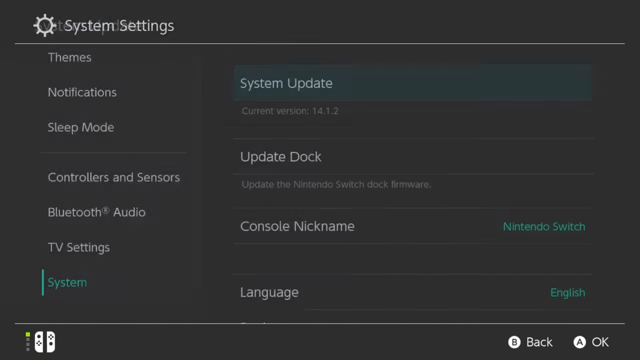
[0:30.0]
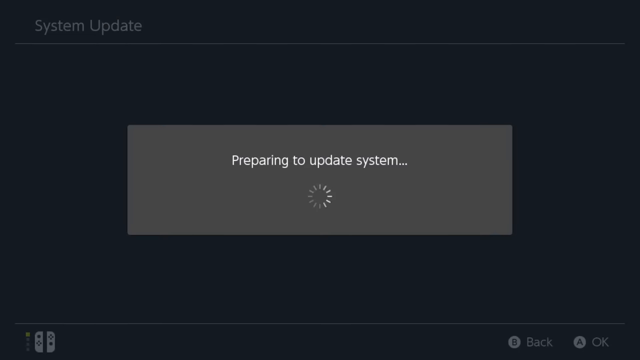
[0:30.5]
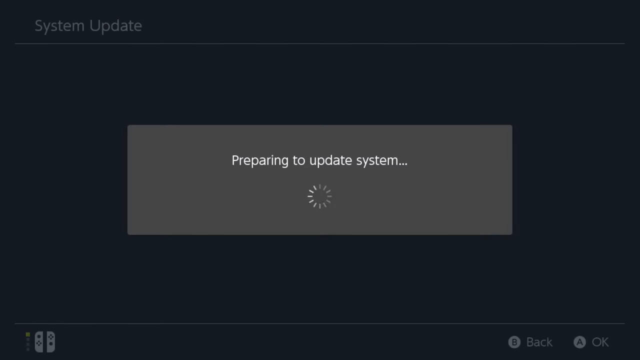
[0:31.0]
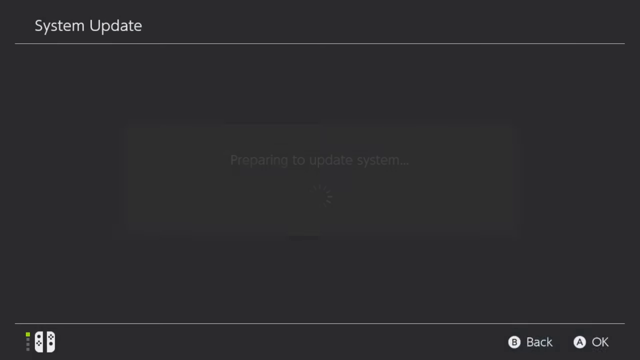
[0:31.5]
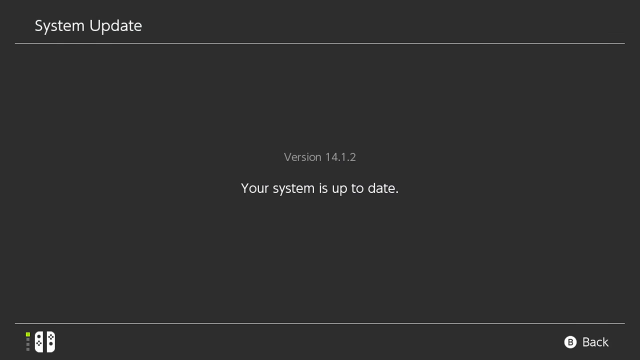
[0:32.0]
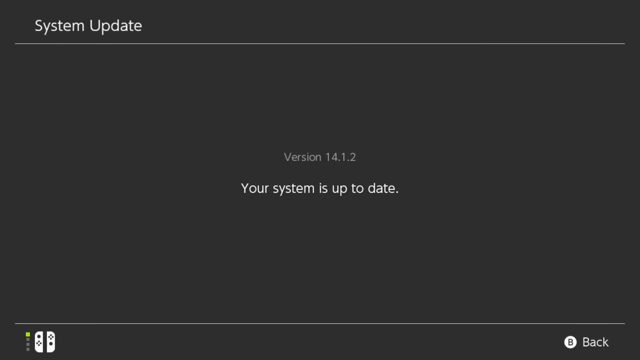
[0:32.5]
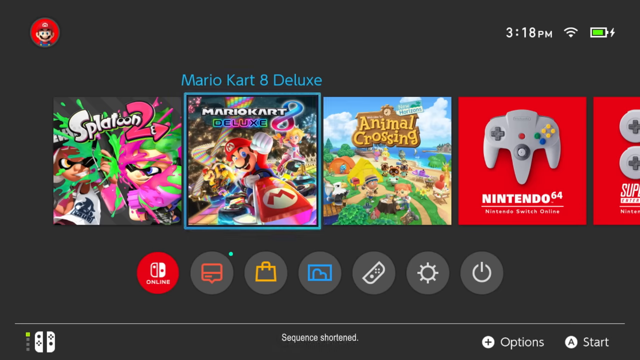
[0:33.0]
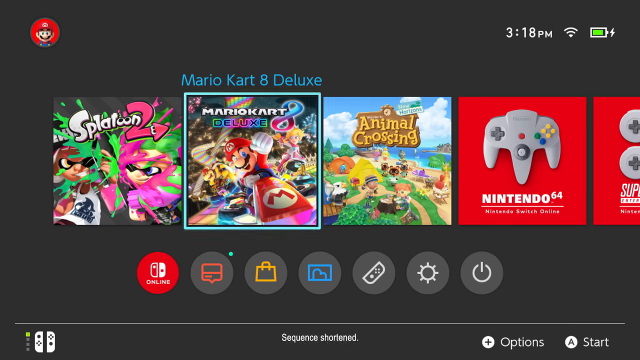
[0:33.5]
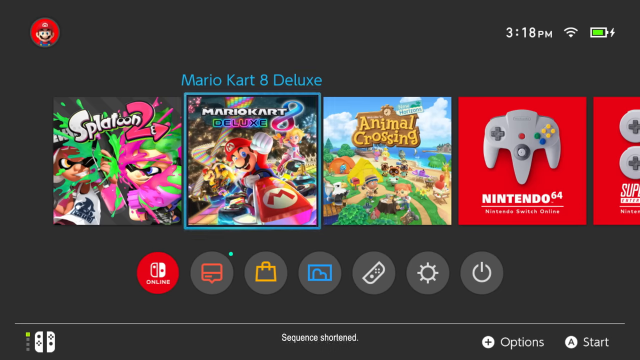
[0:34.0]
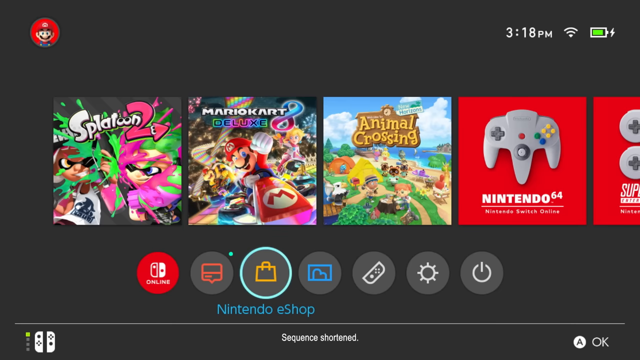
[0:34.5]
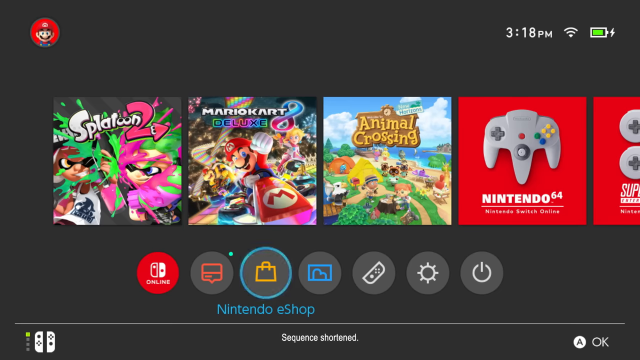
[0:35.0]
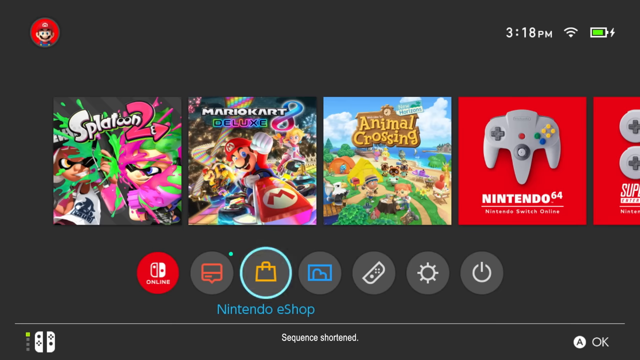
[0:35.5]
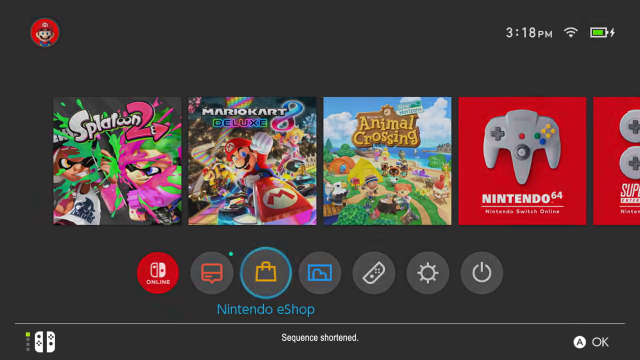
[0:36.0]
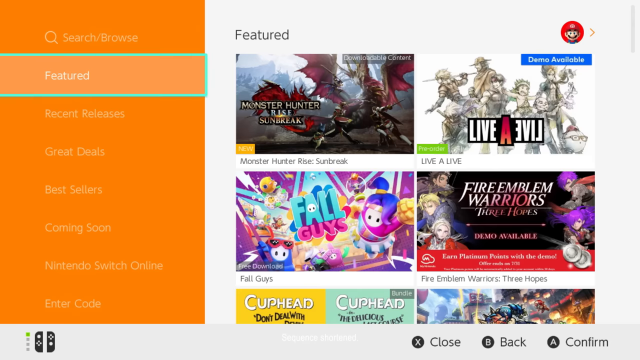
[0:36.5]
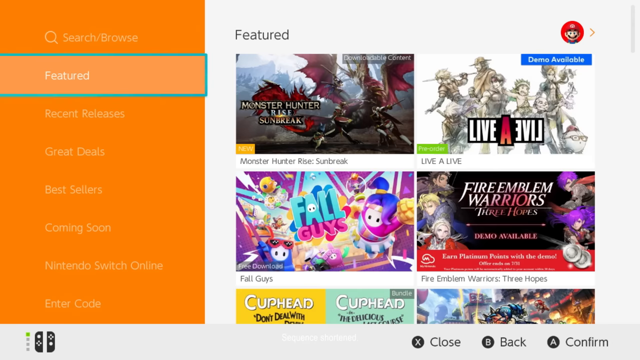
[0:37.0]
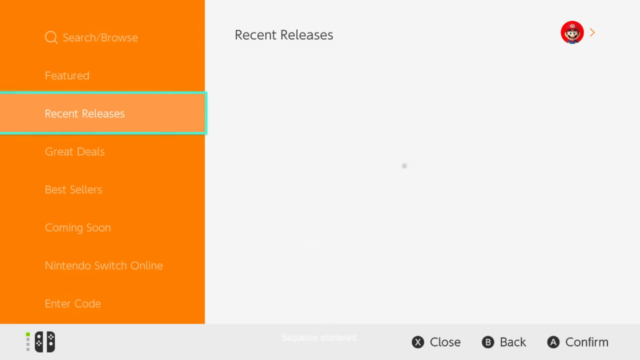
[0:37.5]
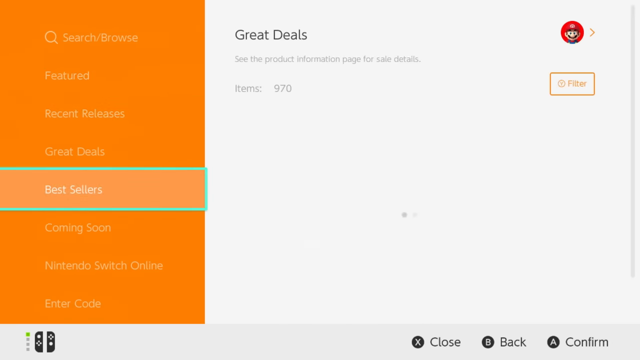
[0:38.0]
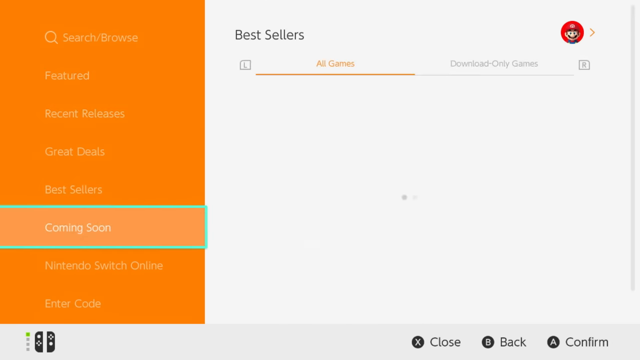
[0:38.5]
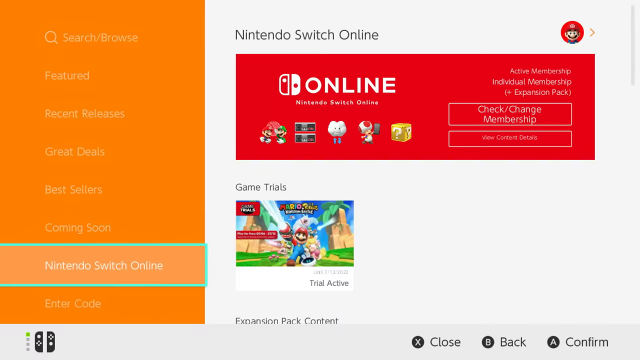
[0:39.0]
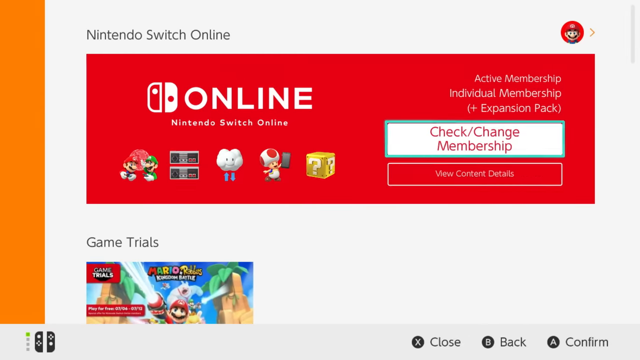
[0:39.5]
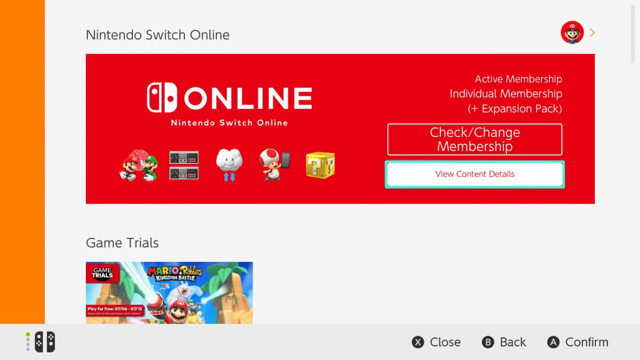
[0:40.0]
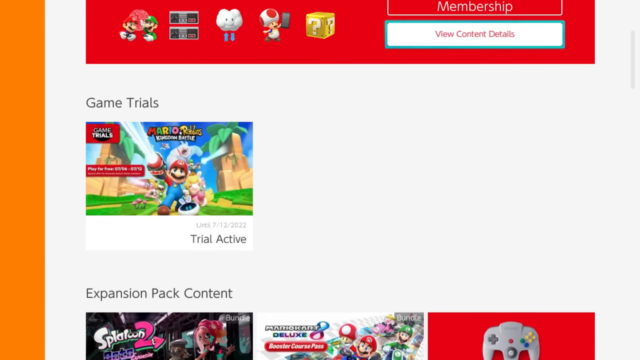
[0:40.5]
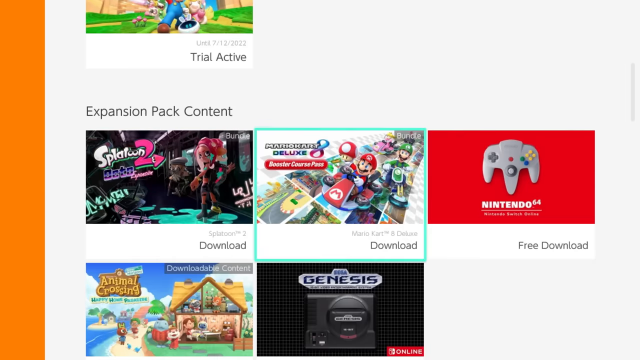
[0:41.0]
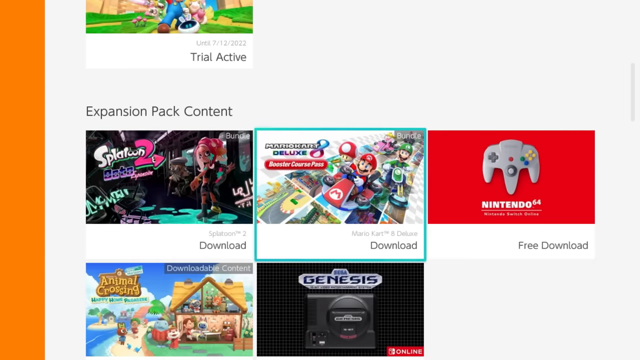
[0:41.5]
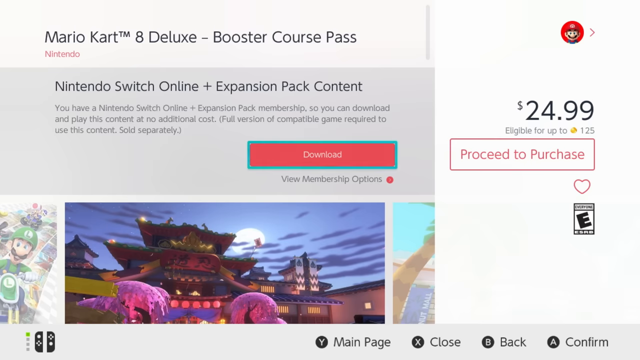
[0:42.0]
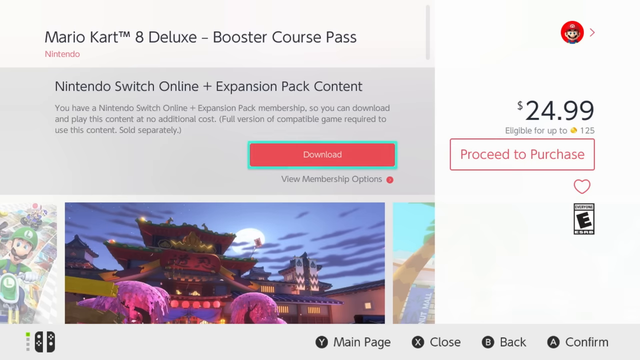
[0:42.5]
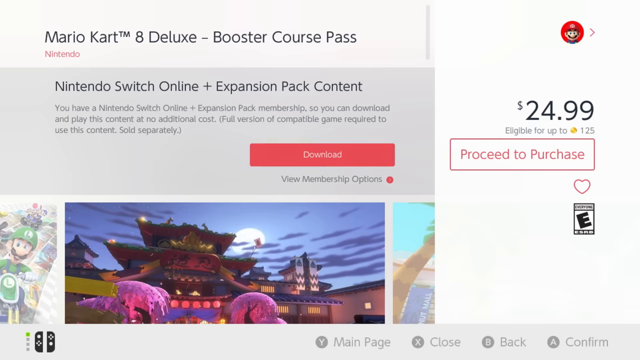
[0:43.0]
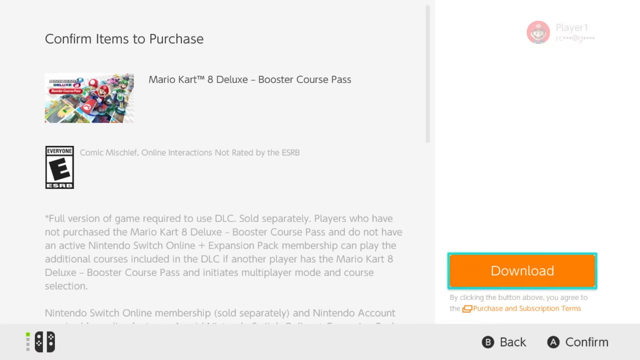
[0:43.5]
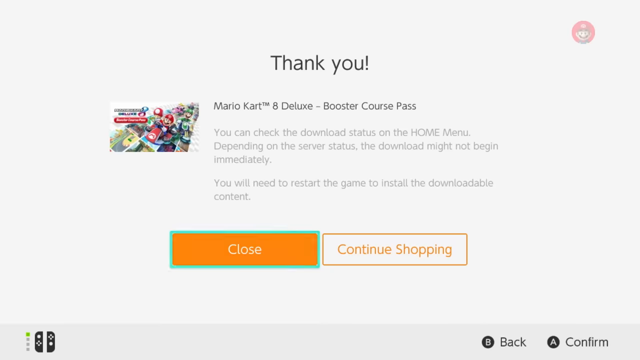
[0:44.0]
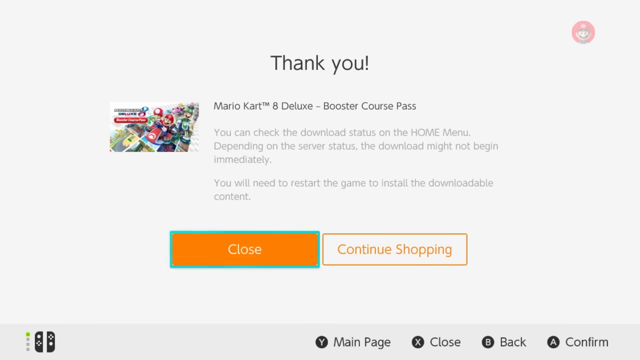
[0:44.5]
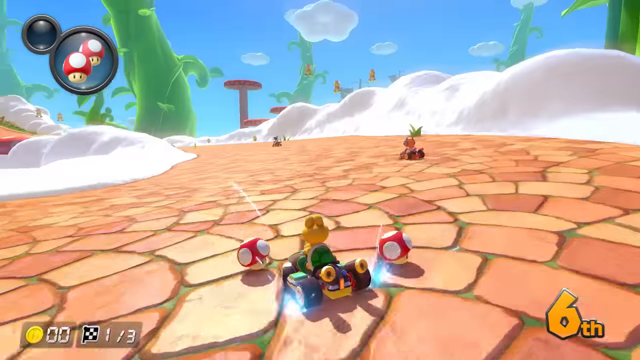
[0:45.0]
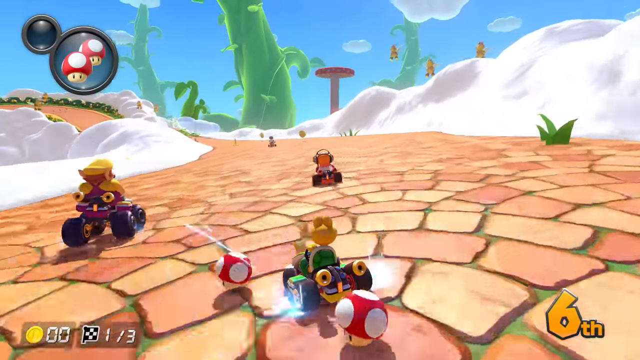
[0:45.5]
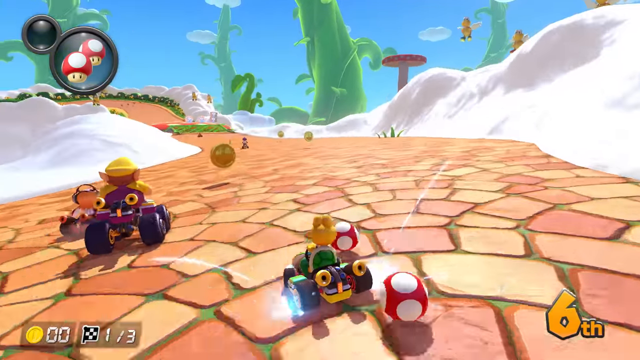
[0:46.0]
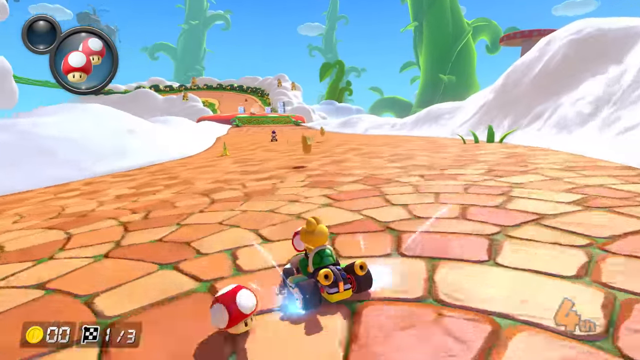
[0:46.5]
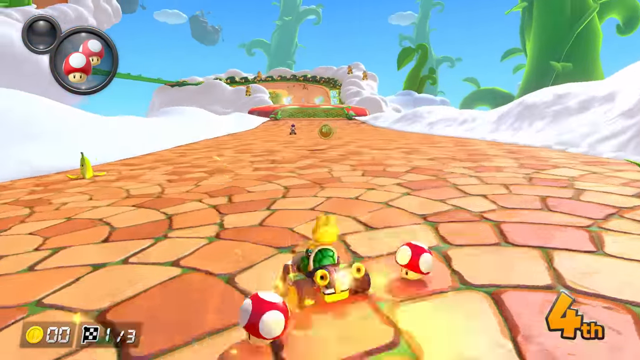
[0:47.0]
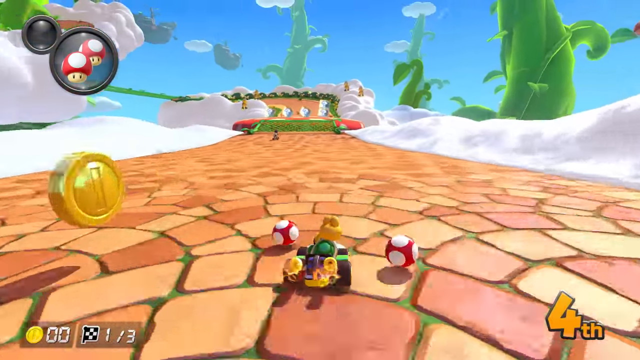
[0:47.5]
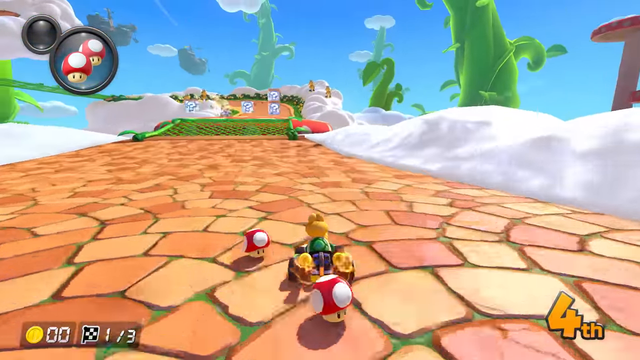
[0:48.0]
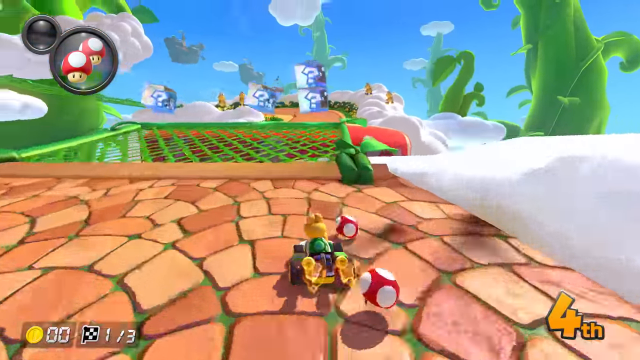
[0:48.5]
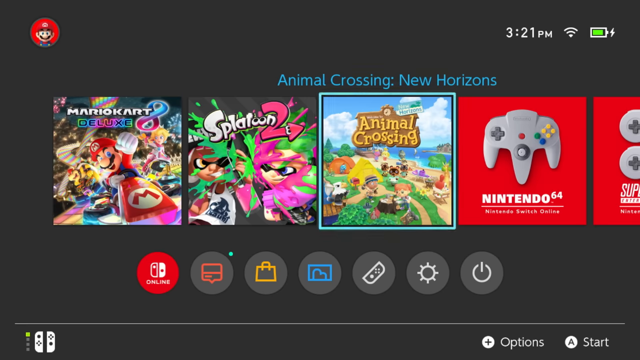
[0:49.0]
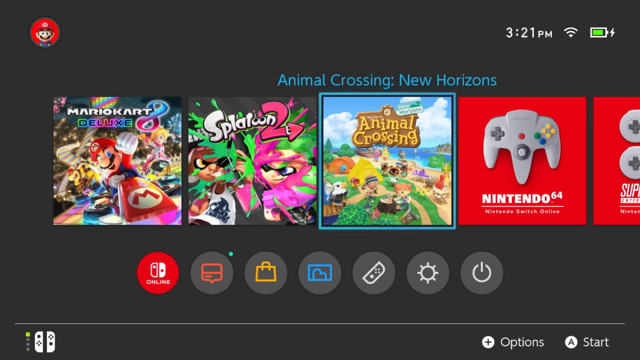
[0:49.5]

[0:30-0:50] A selection is made from a system settings menu, a black menu with white buttons. Options include themes, notifications, sleep mode, controllers and sensors, Bluetooth audio, TV settings, and system, which is selected with a green icon. A gear icon is toward the upper left. The screen shows system update with the current version 14.1.2, a dock update option to update the Nintendo Switch dock firmware, a console nickname of Nintendo Switch selected with a green icon, and the language set to English. Text reads "preparing to update system," and the system is updated. Selections of brightly colored games appear: Splatoon 2, Mario Kart Deluxe, Animal Crossing, and Nintendo 64. The time is 3:18 PM, Wi-Fi is enabled, and the battery is charged. Different circular buttons with selections are at the bottom, and a cart for the Nintendo eShop is selected. The brightly colored Featured menu and the Search Browse are gone through.